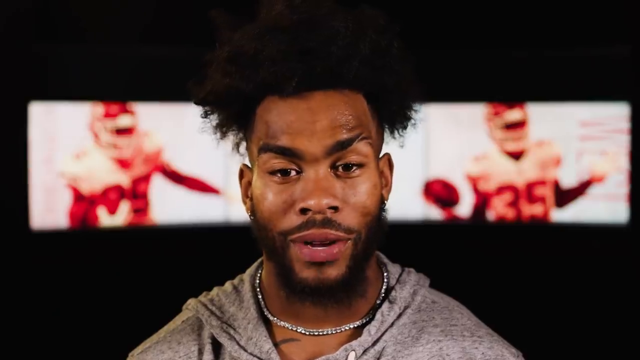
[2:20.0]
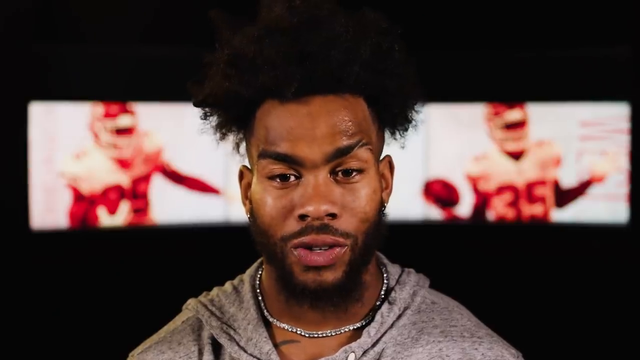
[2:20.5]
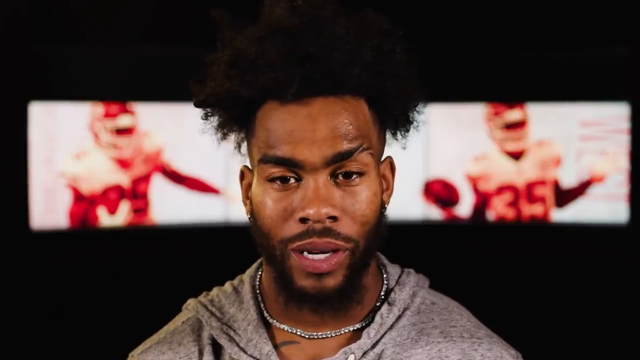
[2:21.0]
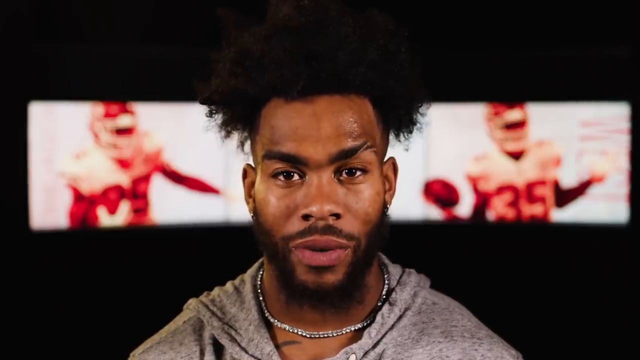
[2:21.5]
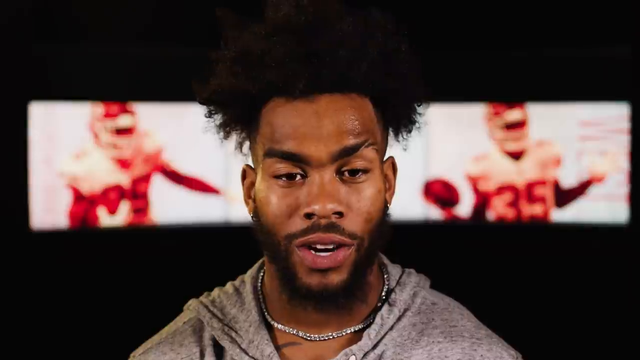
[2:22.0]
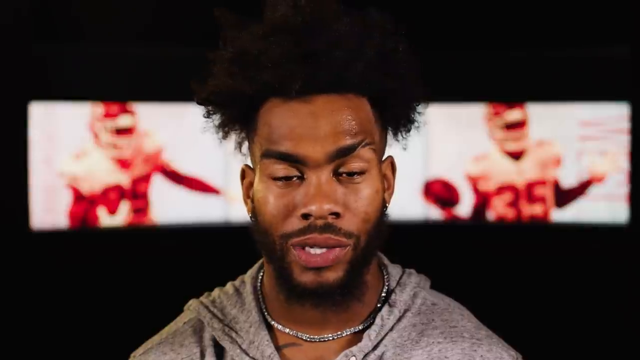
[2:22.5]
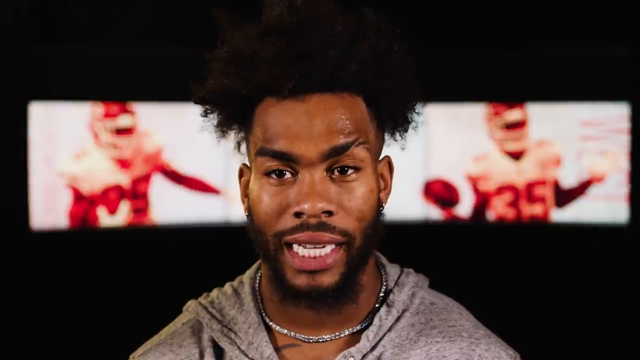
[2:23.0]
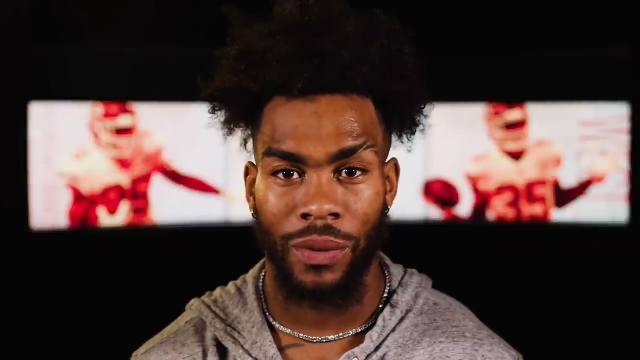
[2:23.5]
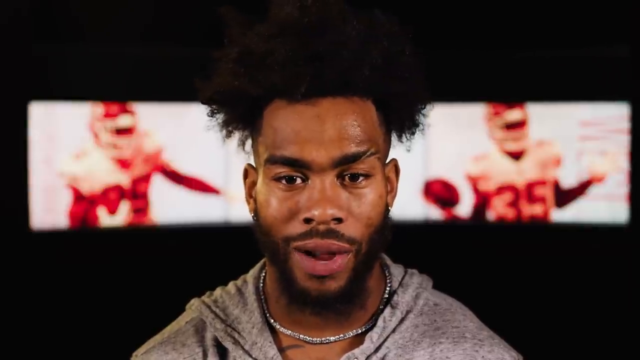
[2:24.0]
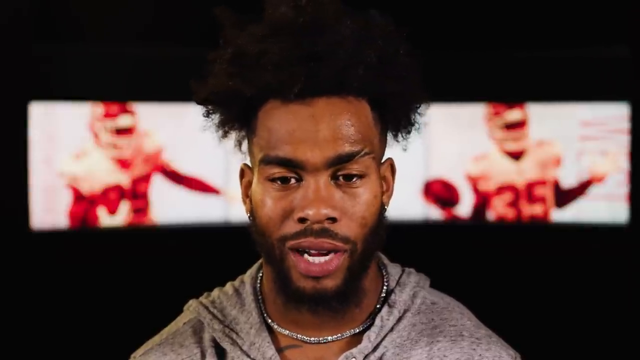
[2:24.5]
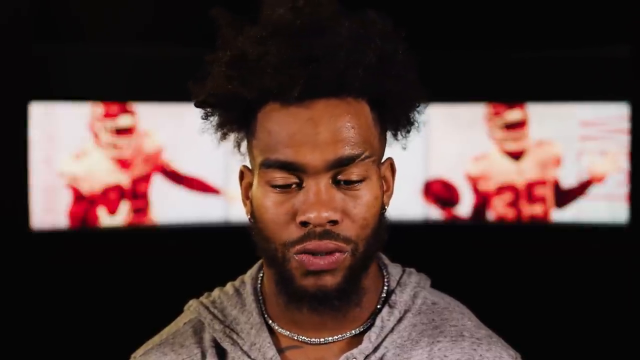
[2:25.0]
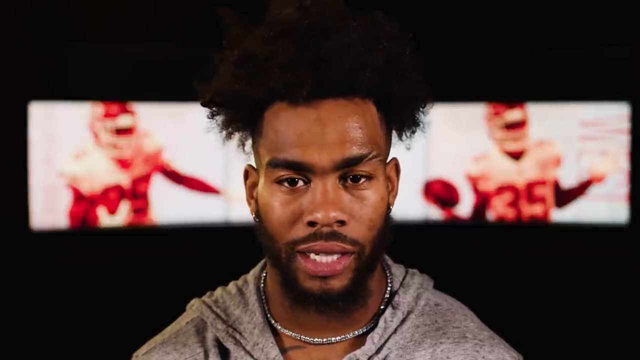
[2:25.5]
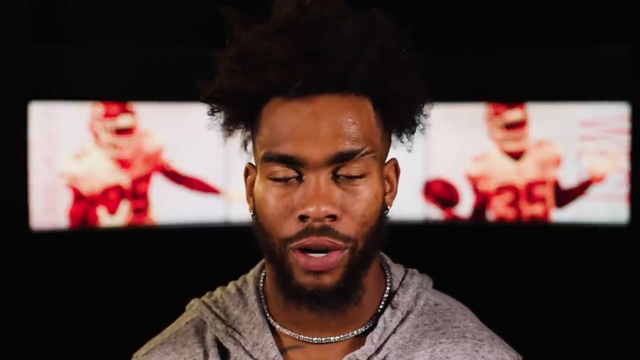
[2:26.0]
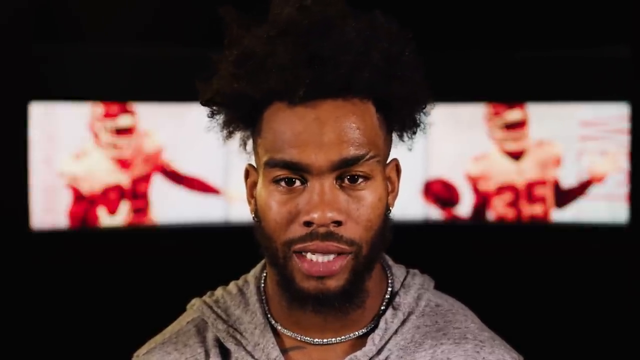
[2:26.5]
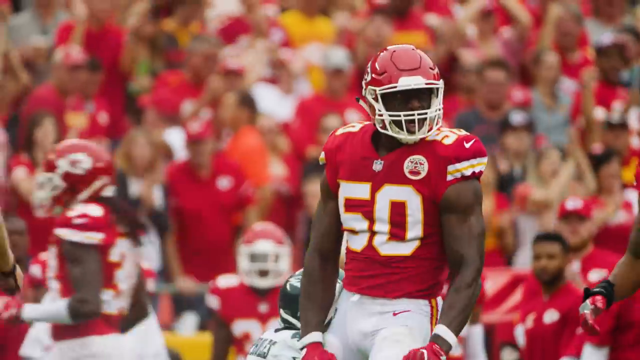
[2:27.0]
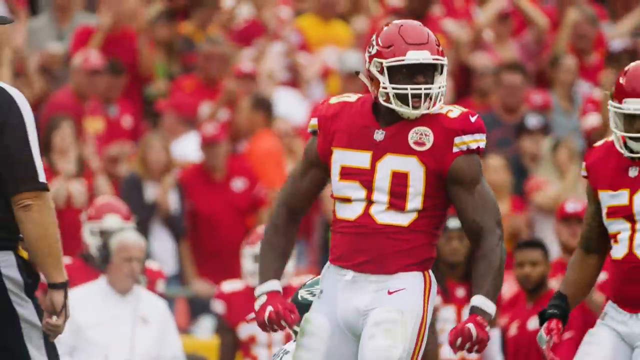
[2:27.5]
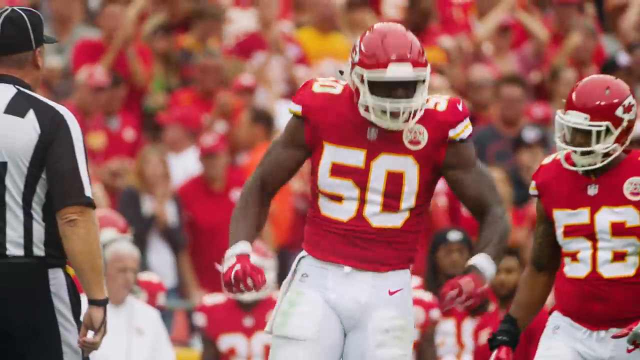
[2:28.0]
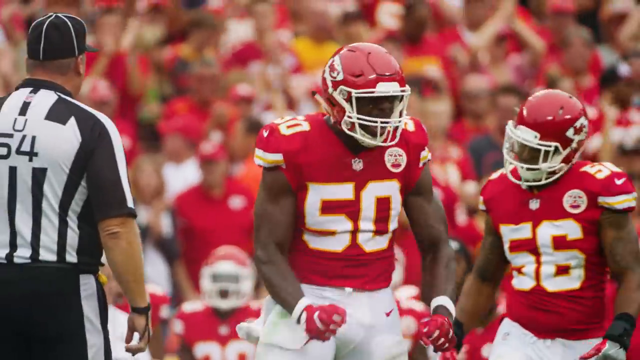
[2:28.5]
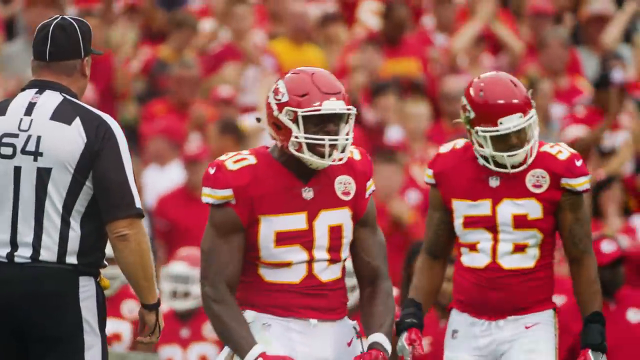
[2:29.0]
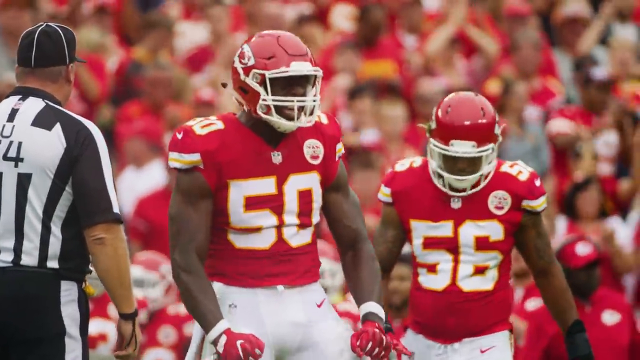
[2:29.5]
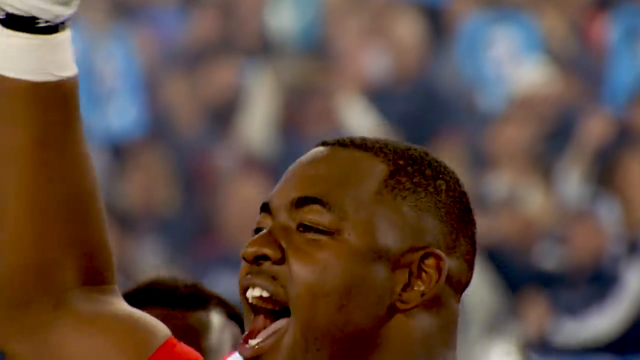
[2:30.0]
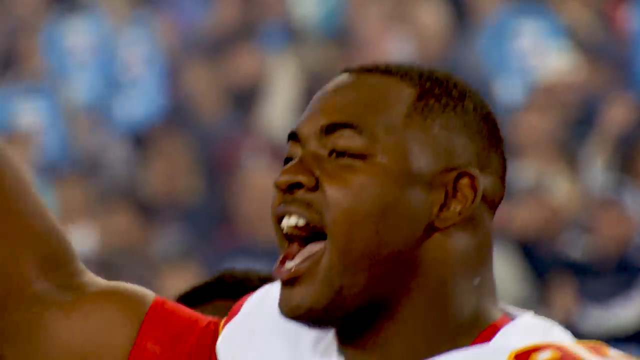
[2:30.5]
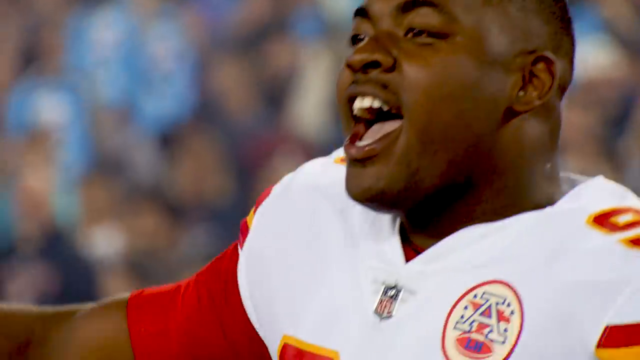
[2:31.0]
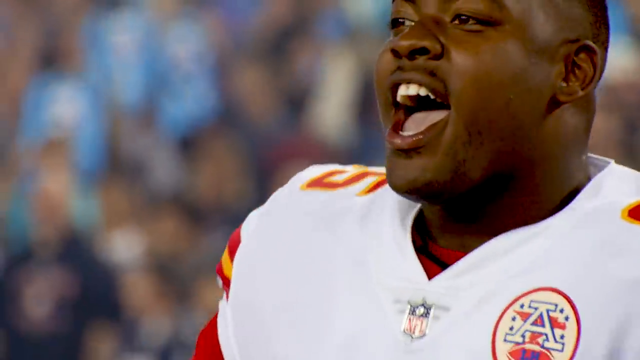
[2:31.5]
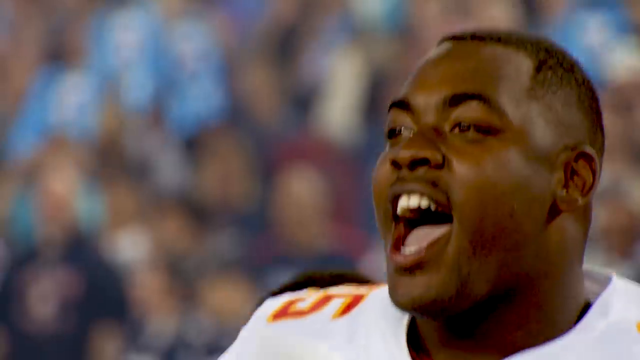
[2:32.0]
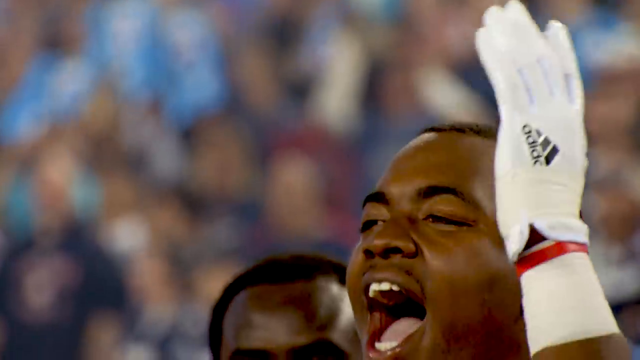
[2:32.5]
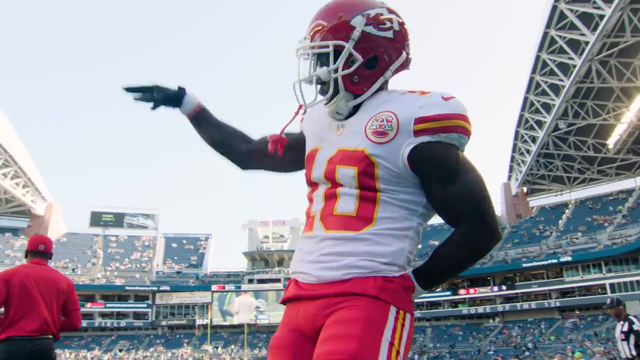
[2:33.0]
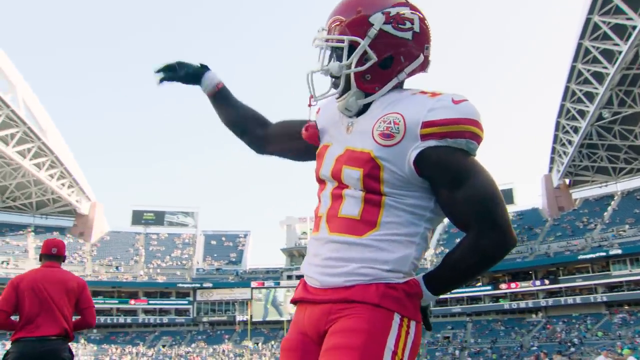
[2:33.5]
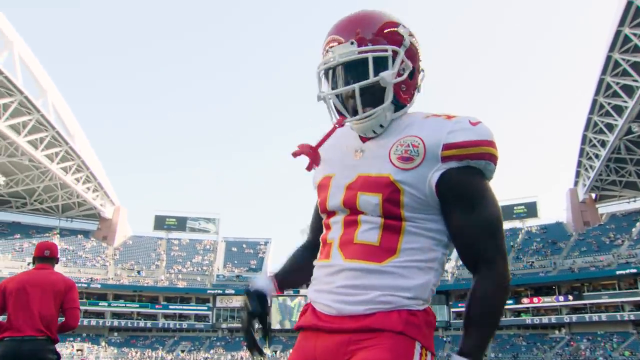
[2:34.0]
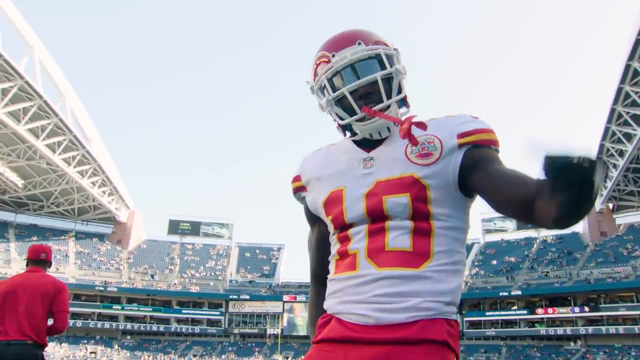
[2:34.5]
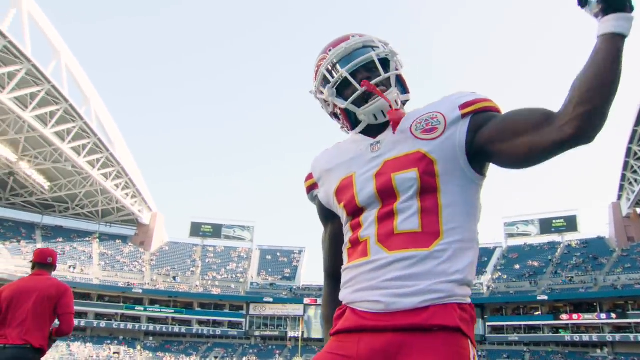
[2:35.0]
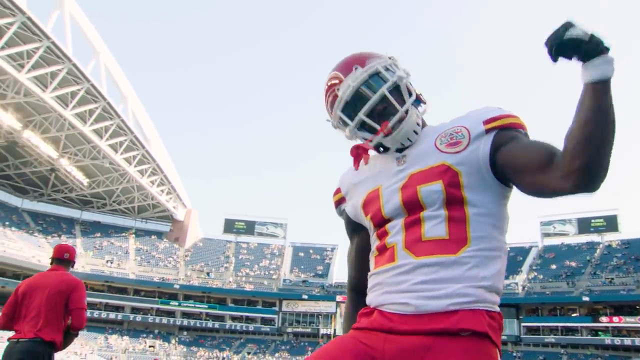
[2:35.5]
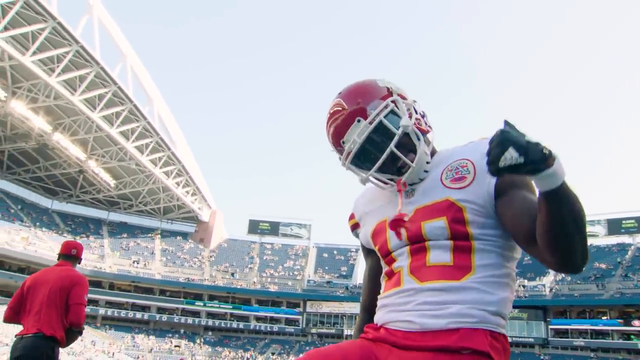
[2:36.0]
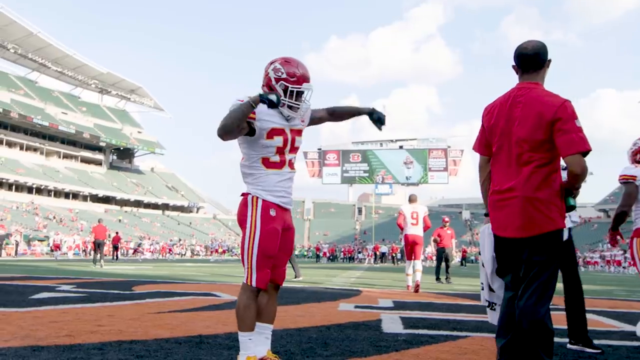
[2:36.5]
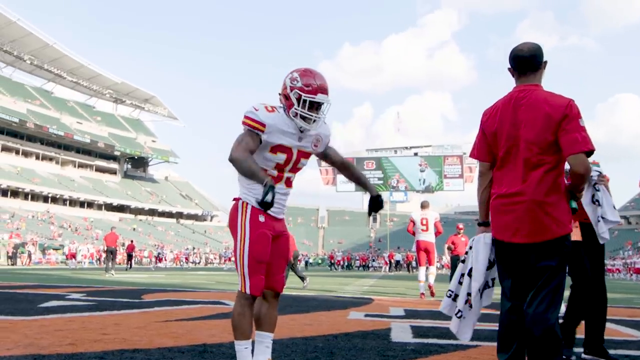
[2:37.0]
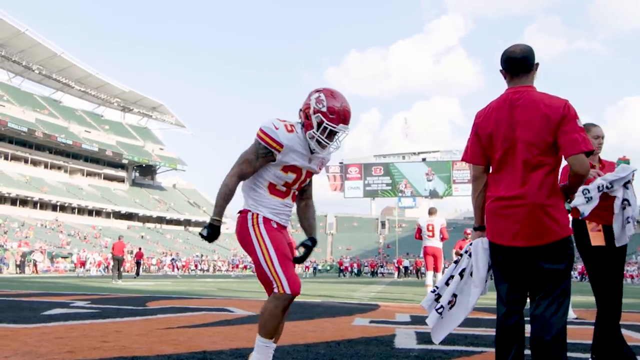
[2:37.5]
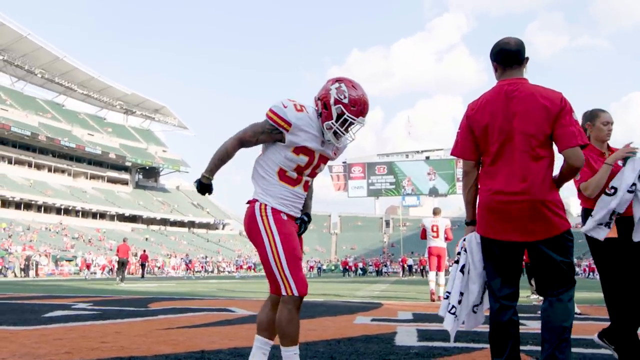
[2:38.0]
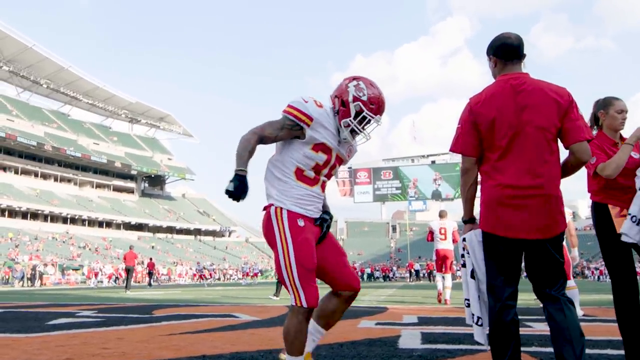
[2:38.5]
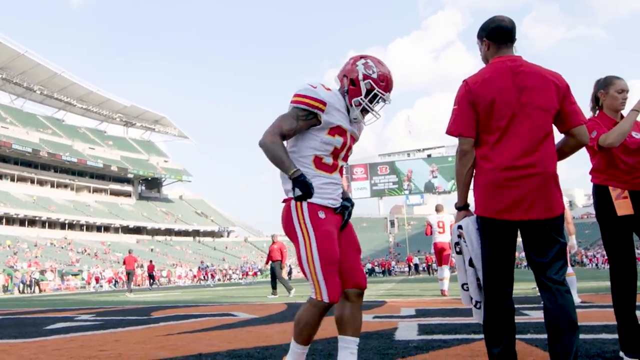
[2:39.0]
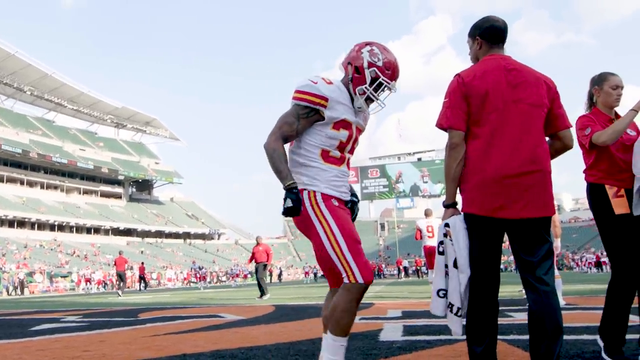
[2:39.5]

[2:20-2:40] Chacandrick West is at the center of the screen. There is a black bar at the bottom and at the top of the screen, and between them a white bar runs nearly the whole length of the screen from left to right, showing two players to the left and right of his head. He speaks to the camera, shaking his head slightly, and appears more subdued. The video moves to another clip showing half of a referee: his left-hand side is obscured, but most of his head, his right back and shoulder and his right arm are visible in the center of the screen, with a crowd in the background behind him. He wears number 50, and to his right is another teammate wearing number 56; he makes a strength-type gesture, moving both arms downwards and centrally. A touchline shot follows of a young, athletic-looking black man in a white shirt with no helmet. Another individual wearing 10 then appears to be dancing in some sort of celebration.